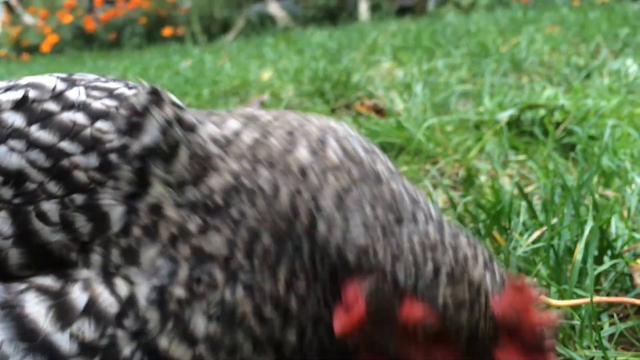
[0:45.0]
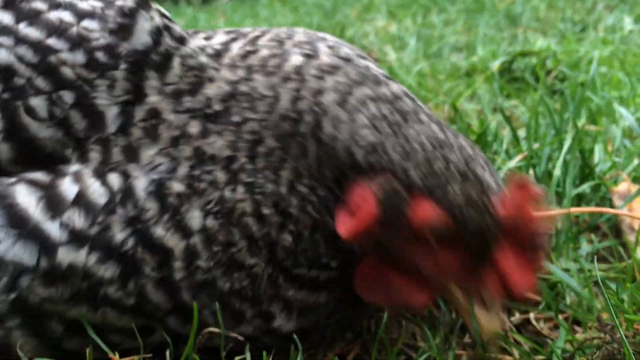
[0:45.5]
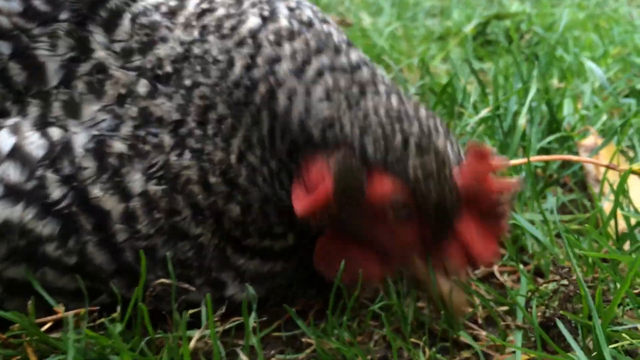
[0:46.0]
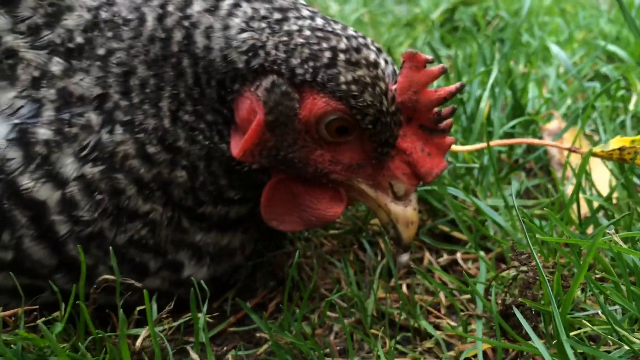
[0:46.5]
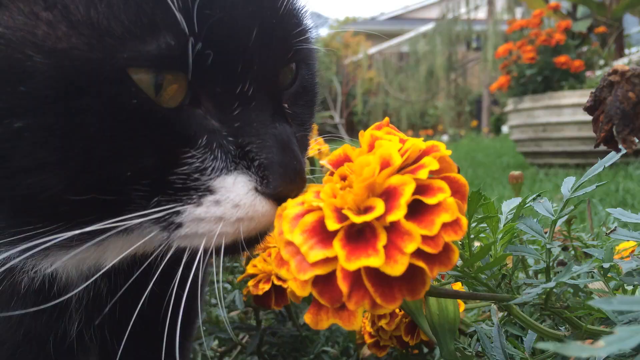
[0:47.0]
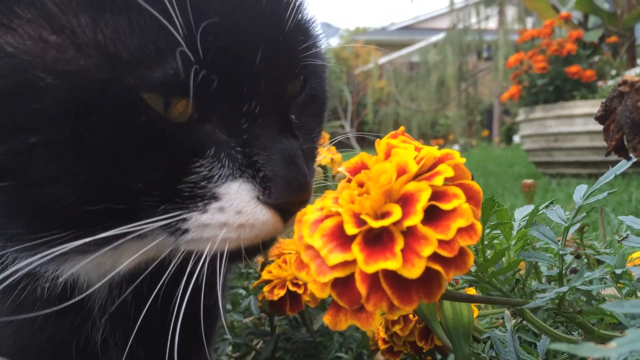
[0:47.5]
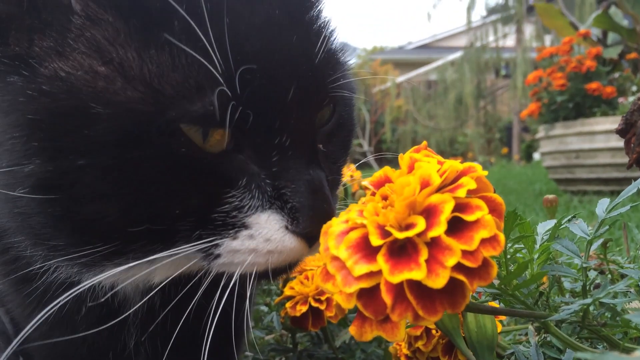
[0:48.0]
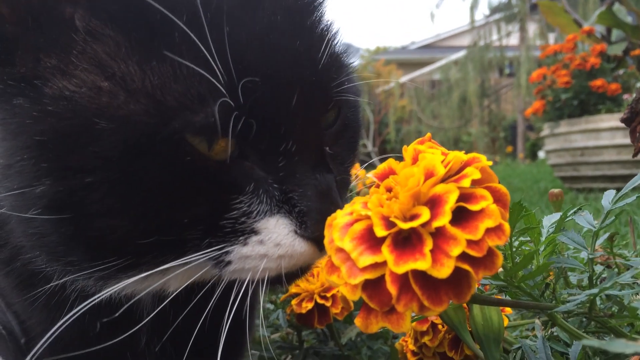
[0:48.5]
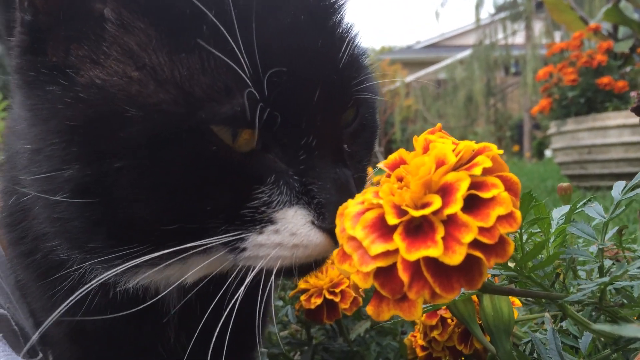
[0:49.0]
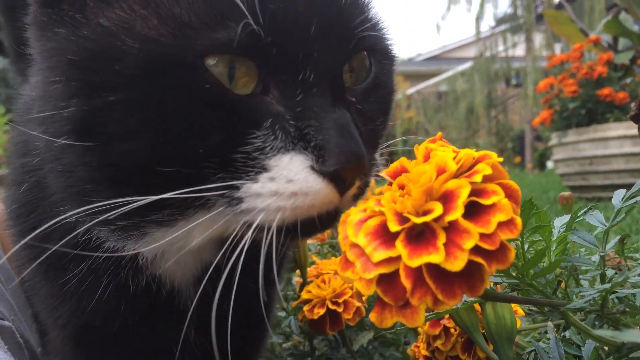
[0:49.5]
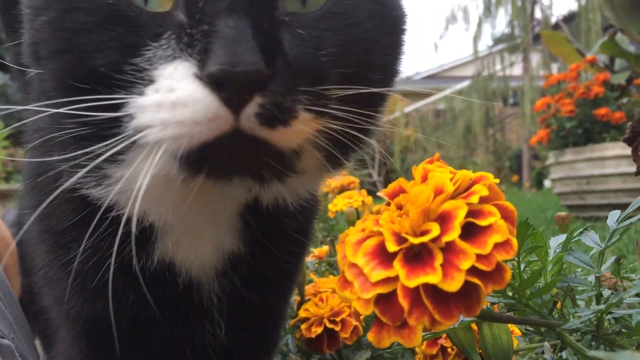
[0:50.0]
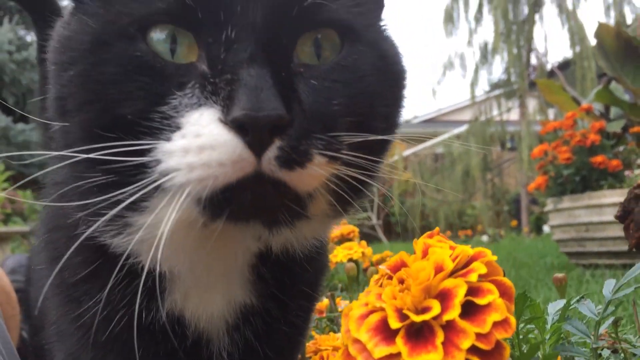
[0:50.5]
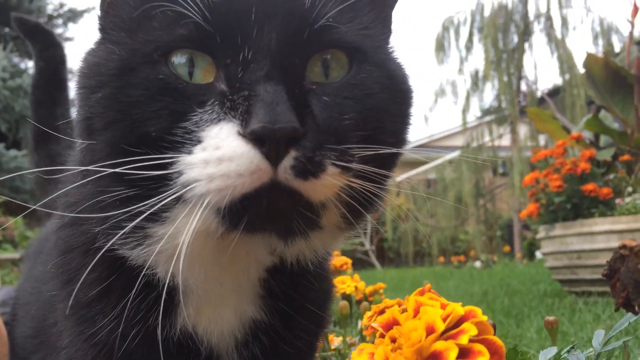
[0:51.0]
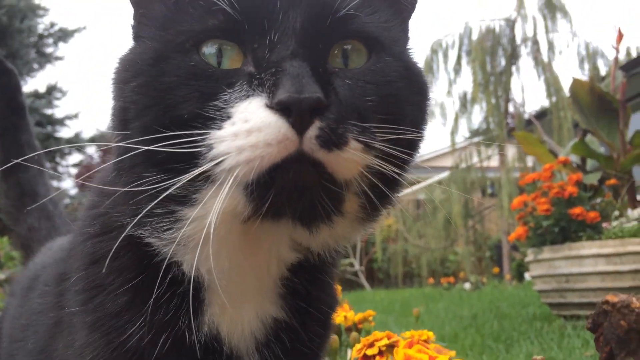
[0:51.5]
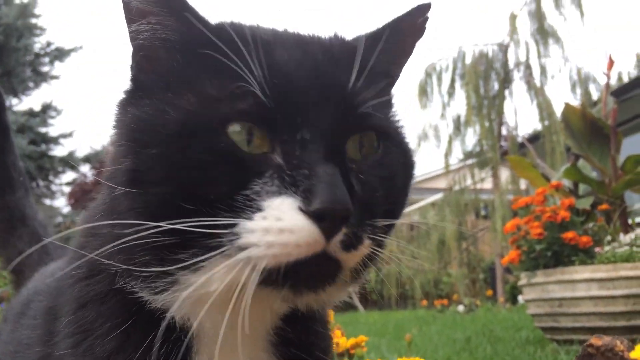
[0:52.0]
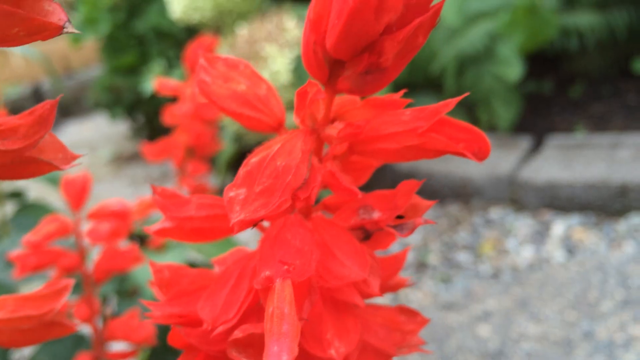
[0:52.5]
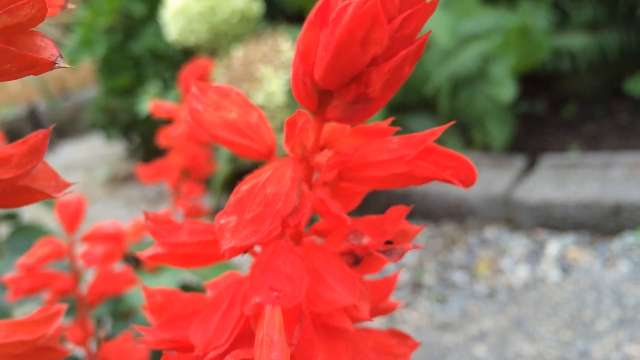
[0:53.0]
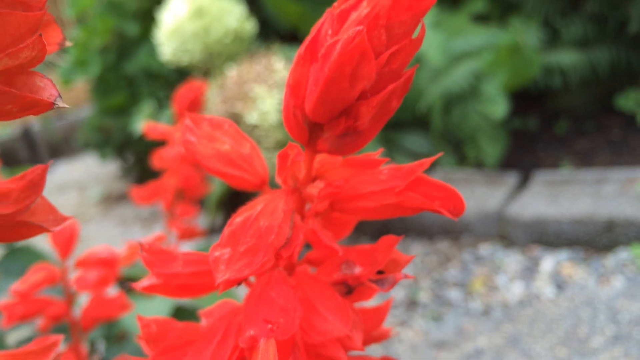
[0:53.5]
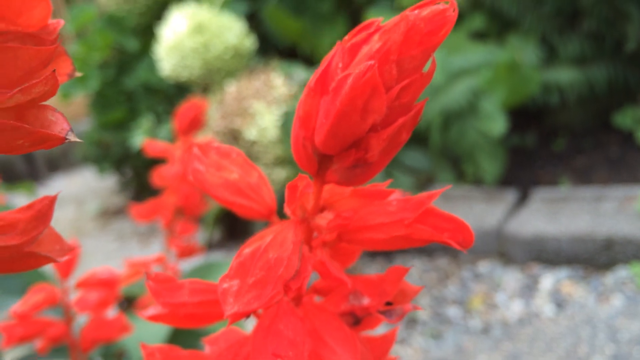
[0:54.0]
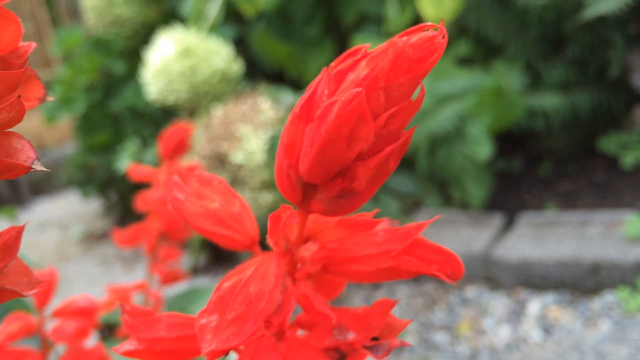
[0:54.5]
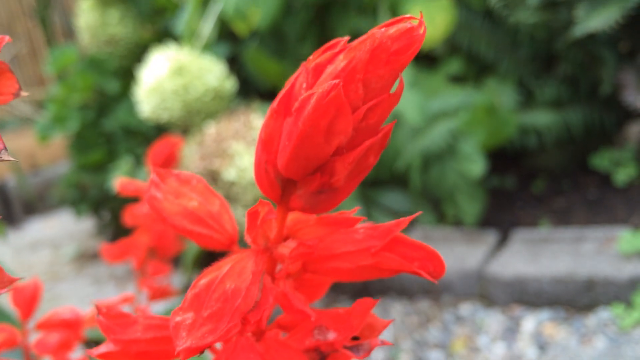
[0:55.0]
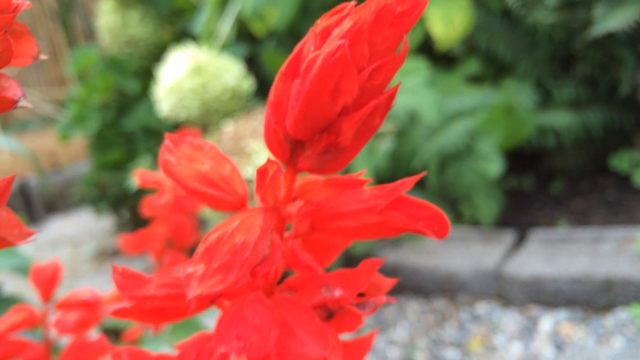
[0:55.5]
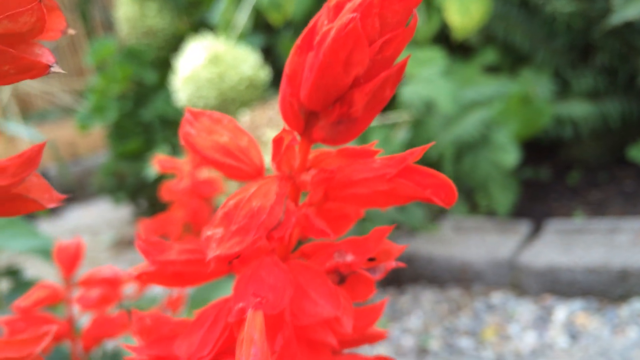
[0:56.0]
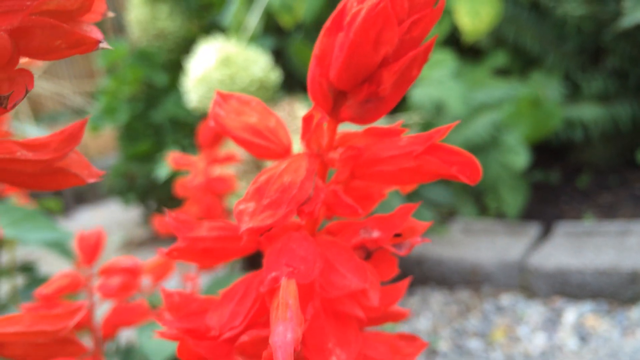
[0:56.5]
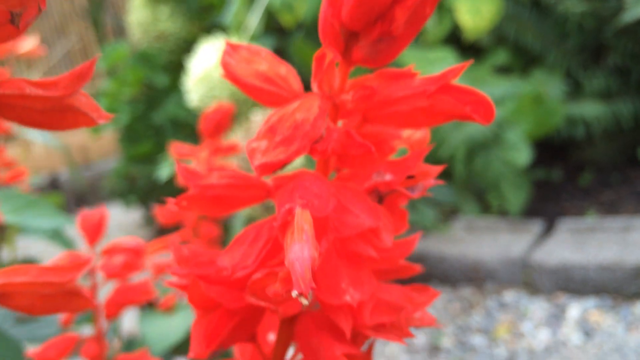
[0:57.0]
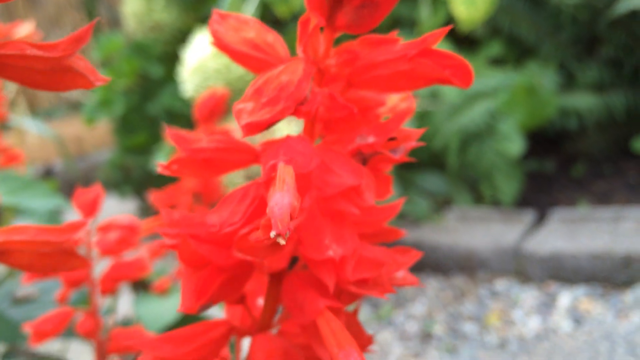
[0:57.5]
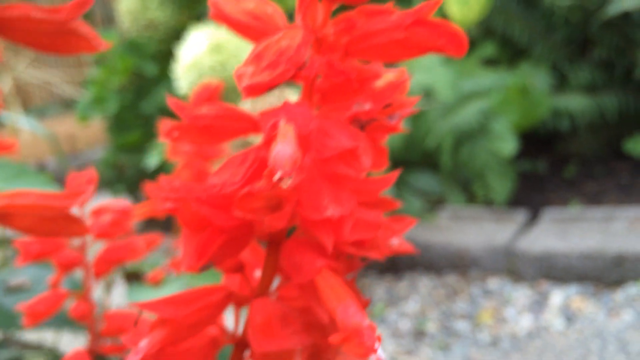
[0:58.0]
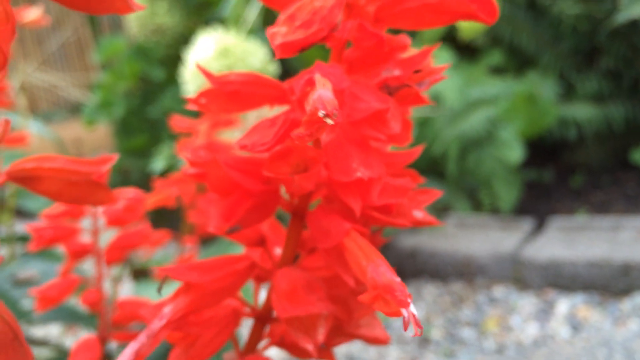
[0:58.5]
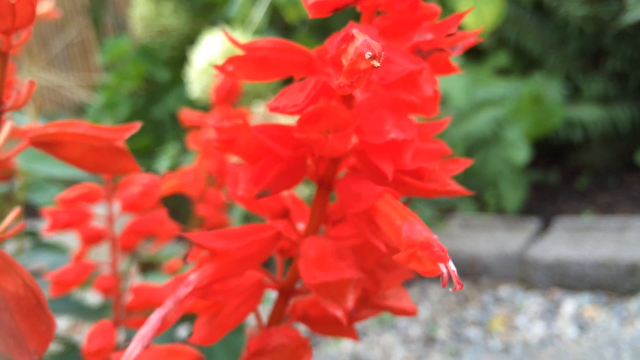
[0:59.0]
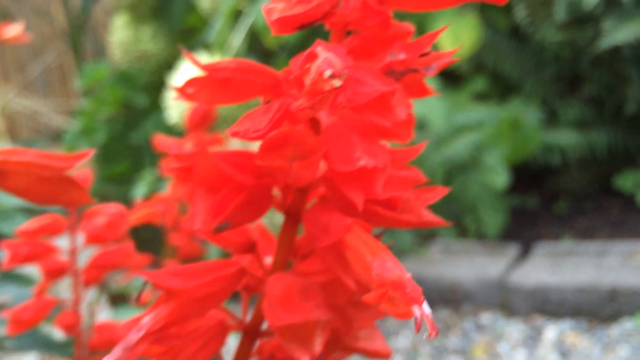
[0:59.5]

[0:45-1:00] After the rooster pecking, the video cuts to a cat smelling an orange-bulbed flower and then looking up and around. Another cut shows a close-up of a red-bulbed flower on a long stem, with some flowers sticking out and a bulb at the very top. The video cuts to the rooster pecking several times into the grass, then quickly to the cat smelling the orange bulb several times and looking around, then back to the flower. Behind the flower is a green bushel of foliage sort of in brown dirt, bordered by gray bricks. The video returns to the rooster and then the cat, with a house visible to the back right behind the cat as it looks around. On the flowers the camera moves up and down, mainly scrolling down; it also scrolls down on the rooster and moves up slowly to capture the cat as it lifts its neck and looks around. Finally the camera goes up first before going down to the stem of the flowers.